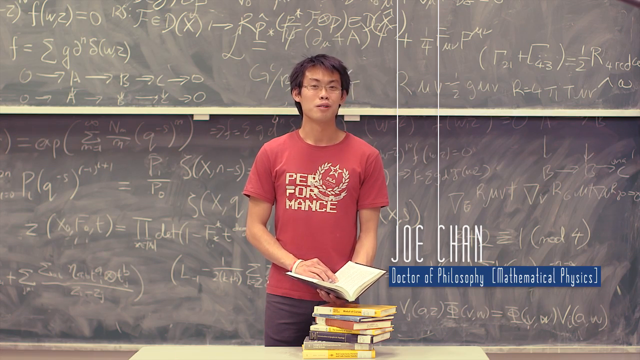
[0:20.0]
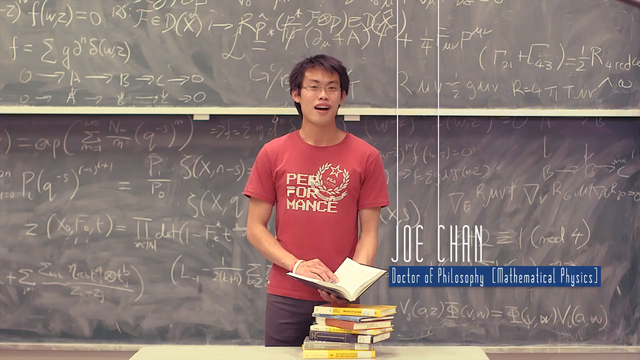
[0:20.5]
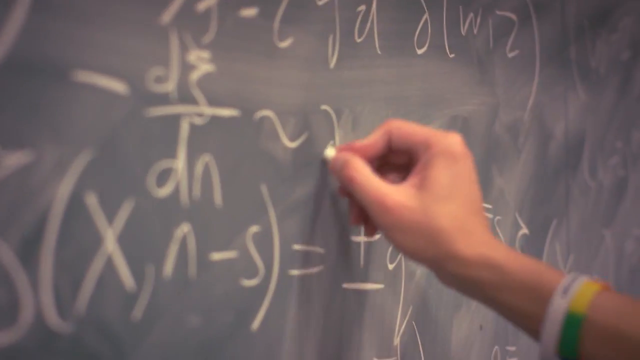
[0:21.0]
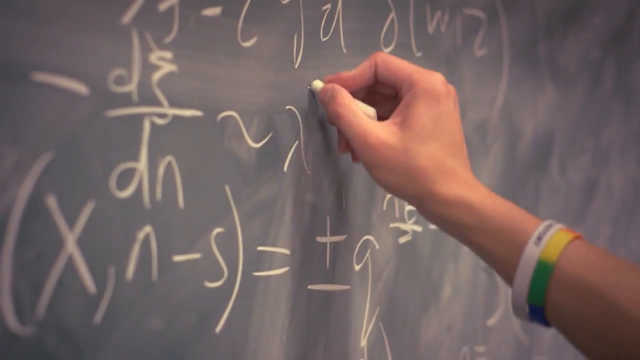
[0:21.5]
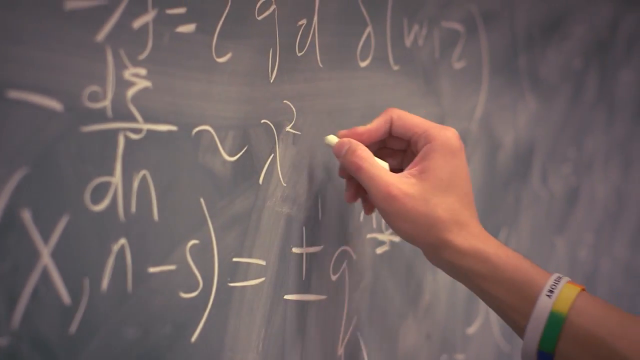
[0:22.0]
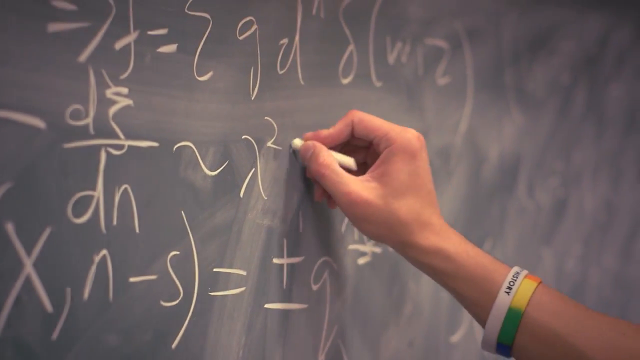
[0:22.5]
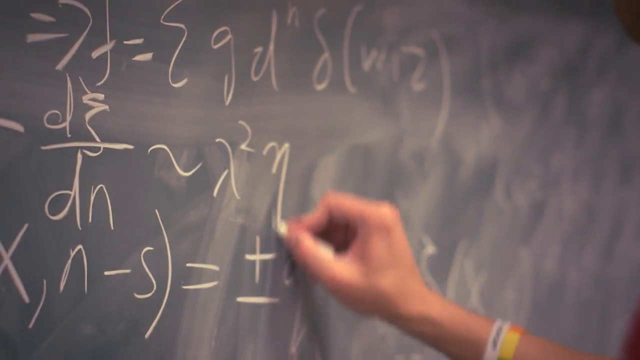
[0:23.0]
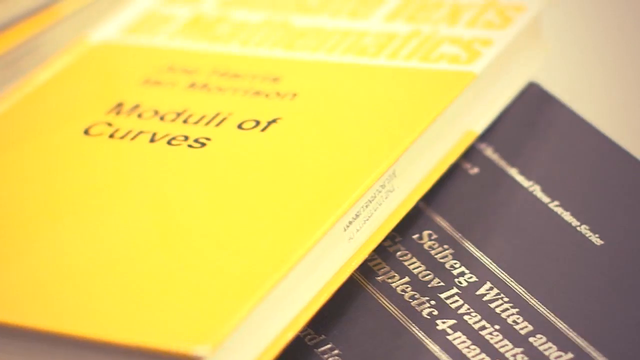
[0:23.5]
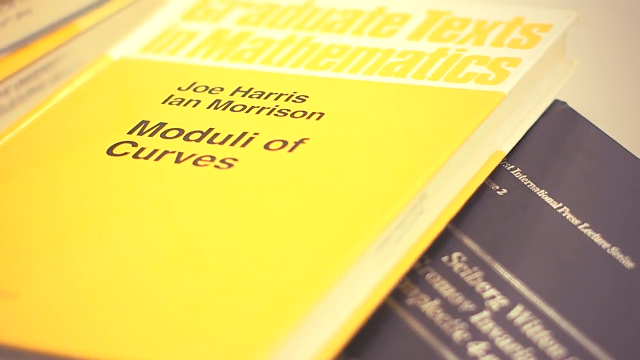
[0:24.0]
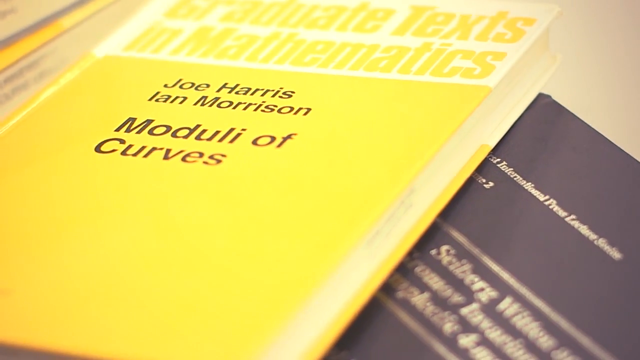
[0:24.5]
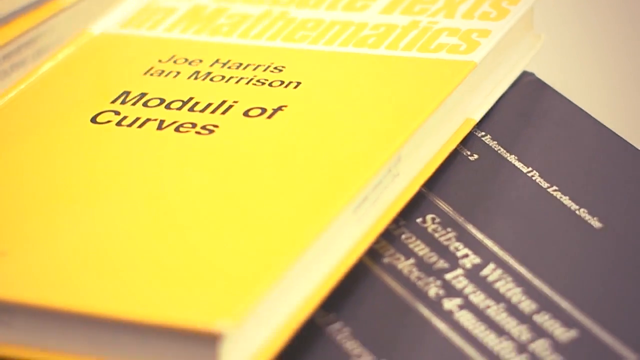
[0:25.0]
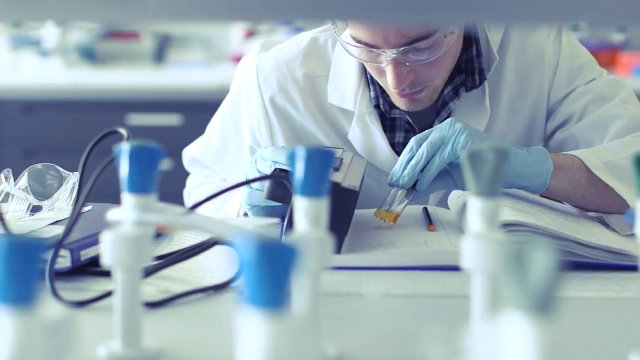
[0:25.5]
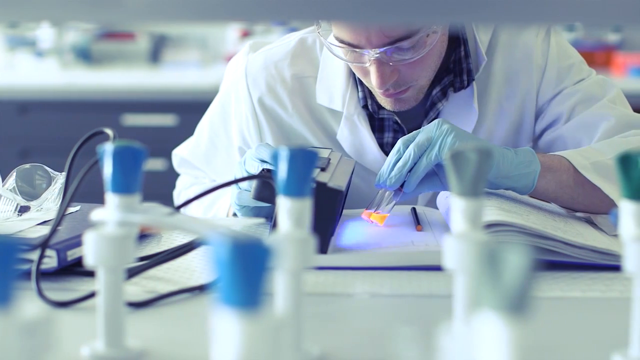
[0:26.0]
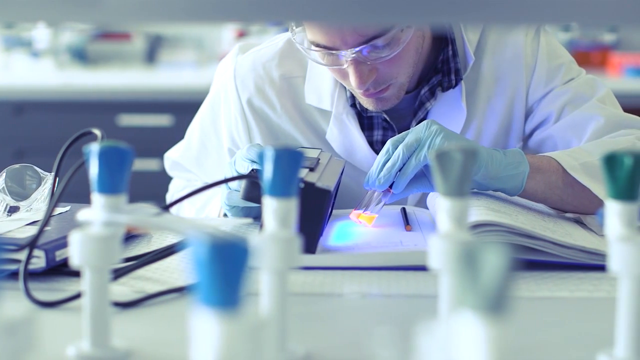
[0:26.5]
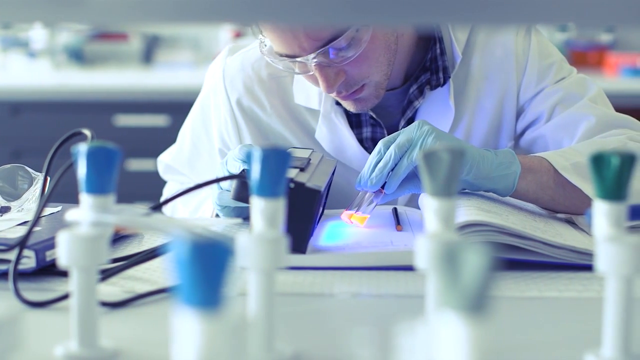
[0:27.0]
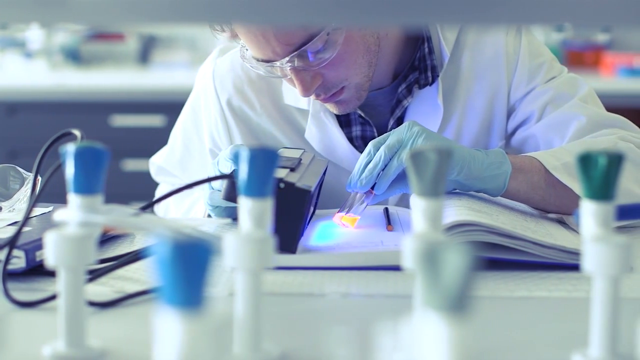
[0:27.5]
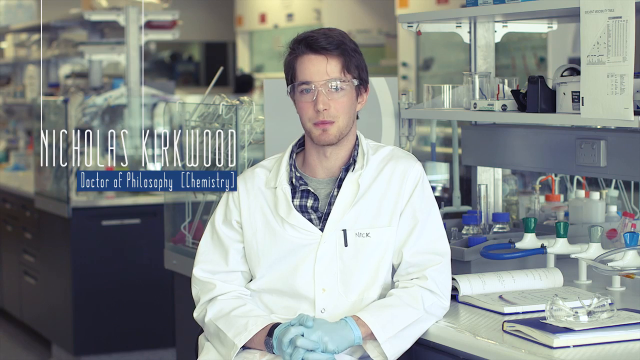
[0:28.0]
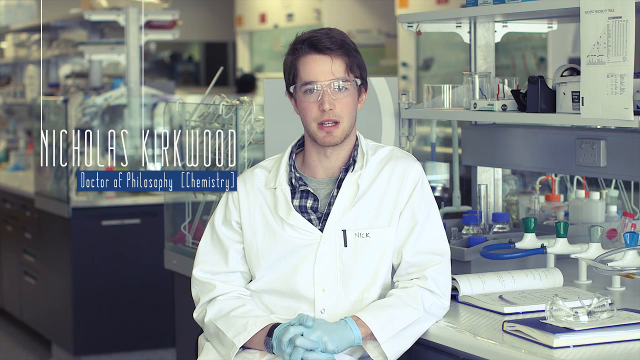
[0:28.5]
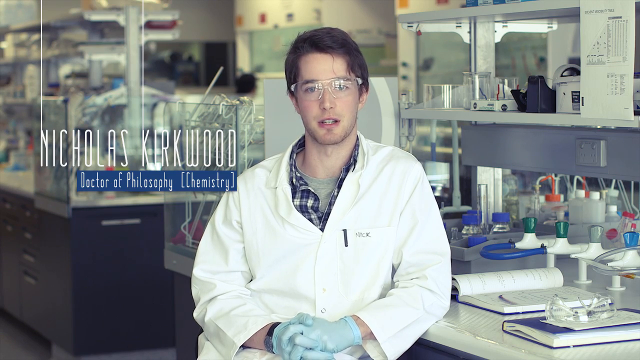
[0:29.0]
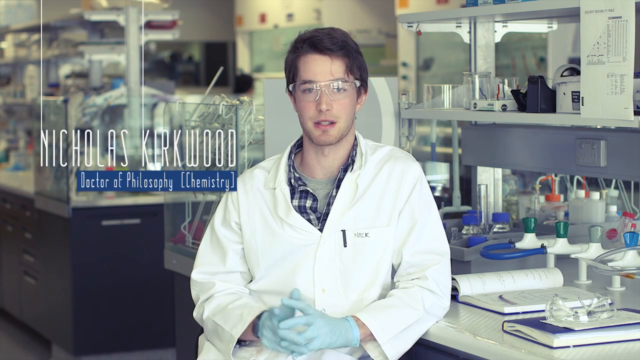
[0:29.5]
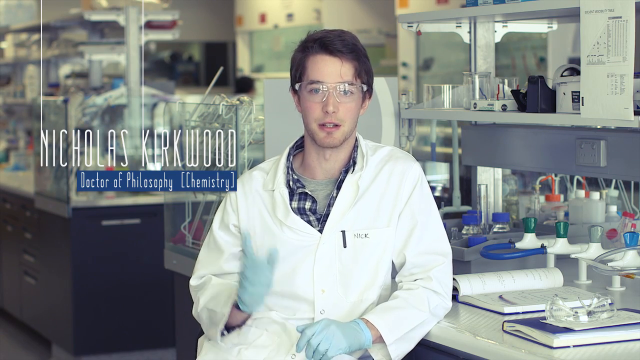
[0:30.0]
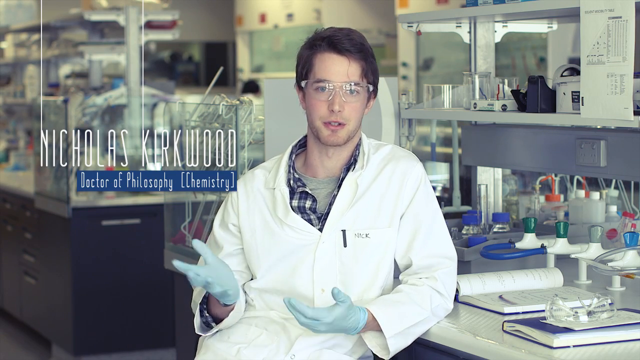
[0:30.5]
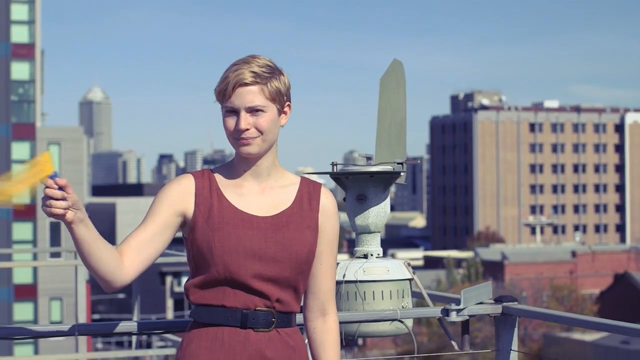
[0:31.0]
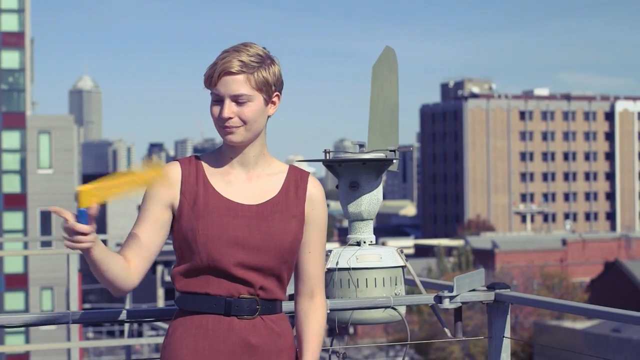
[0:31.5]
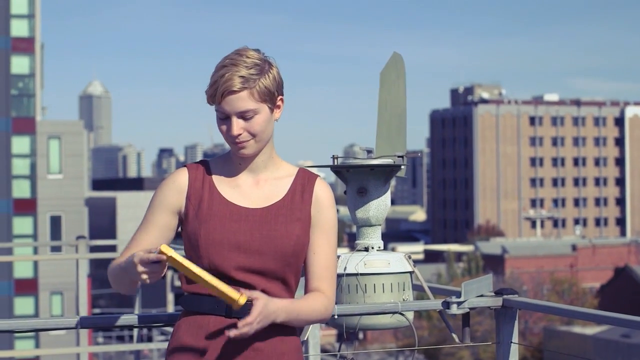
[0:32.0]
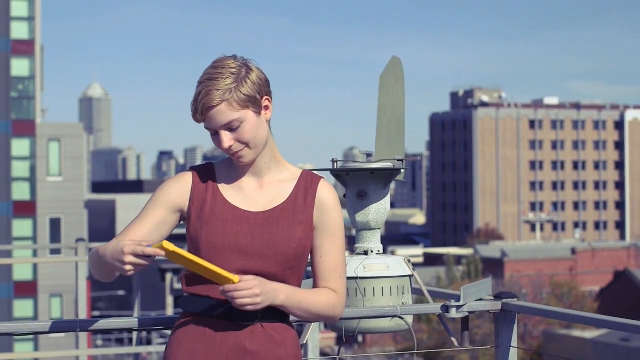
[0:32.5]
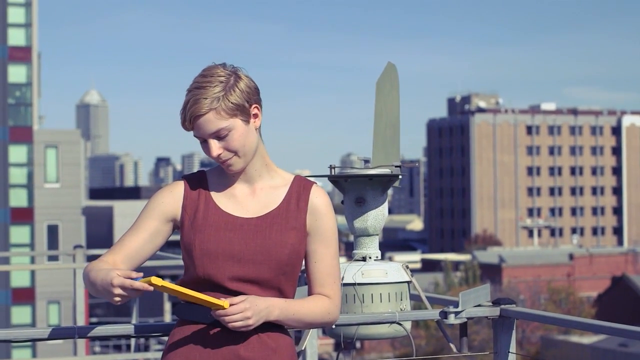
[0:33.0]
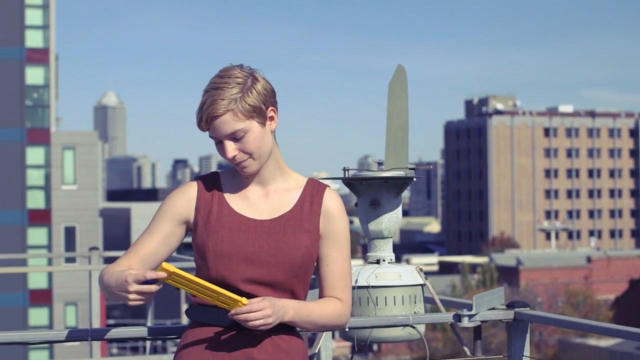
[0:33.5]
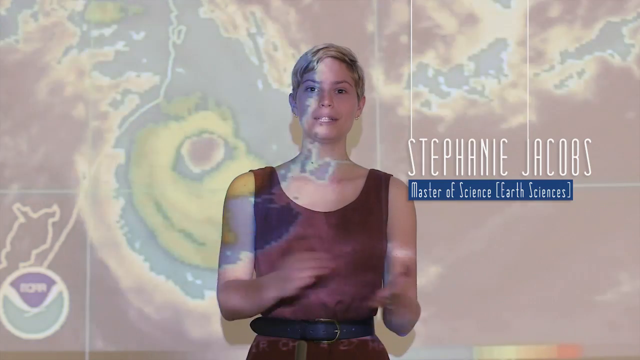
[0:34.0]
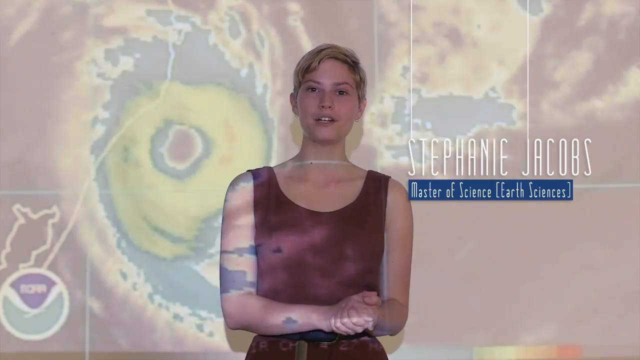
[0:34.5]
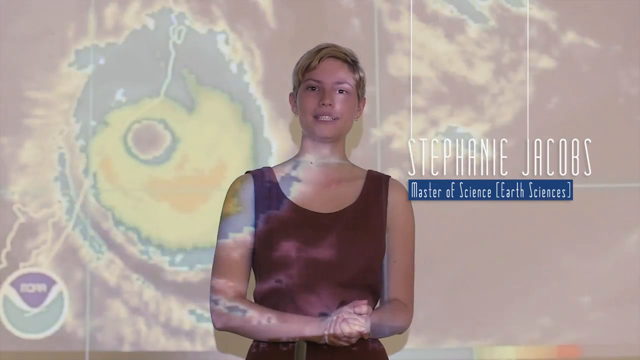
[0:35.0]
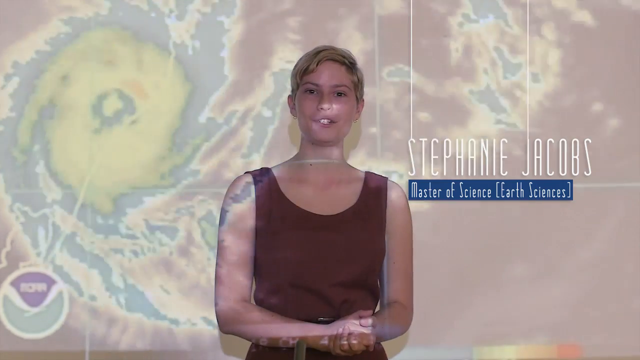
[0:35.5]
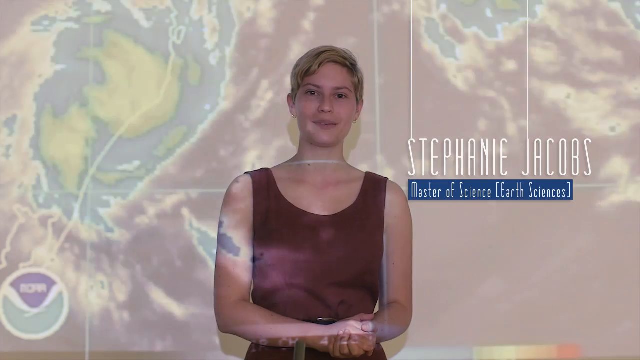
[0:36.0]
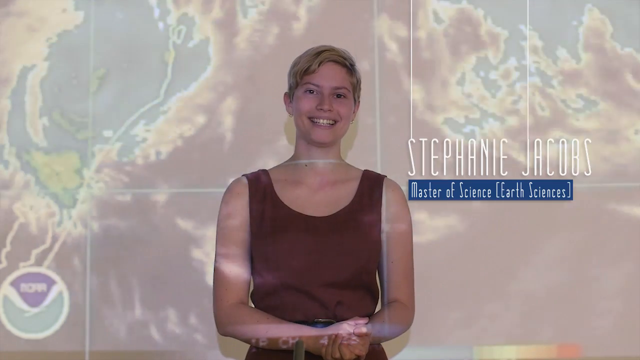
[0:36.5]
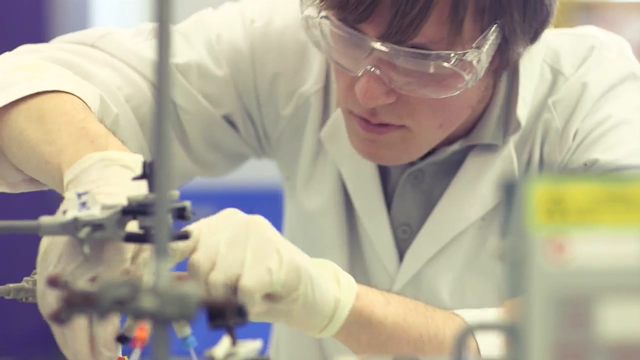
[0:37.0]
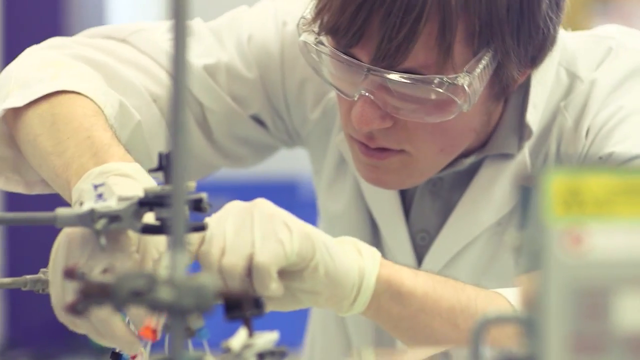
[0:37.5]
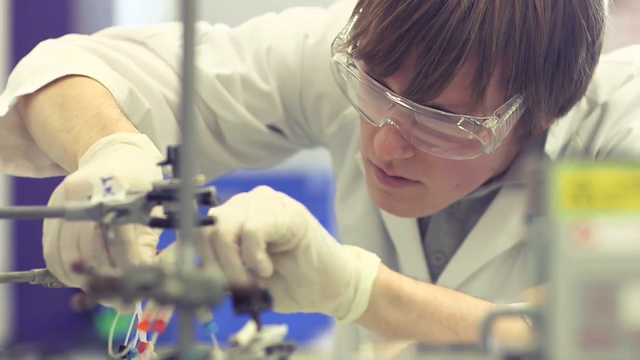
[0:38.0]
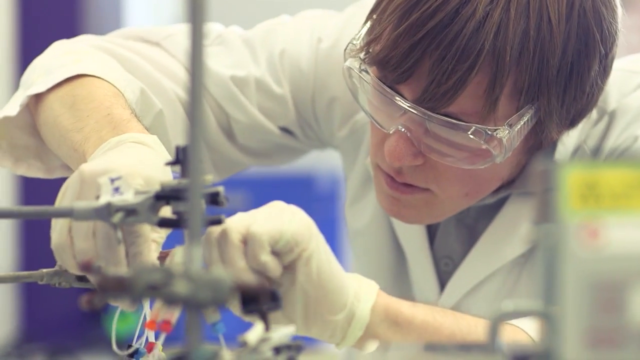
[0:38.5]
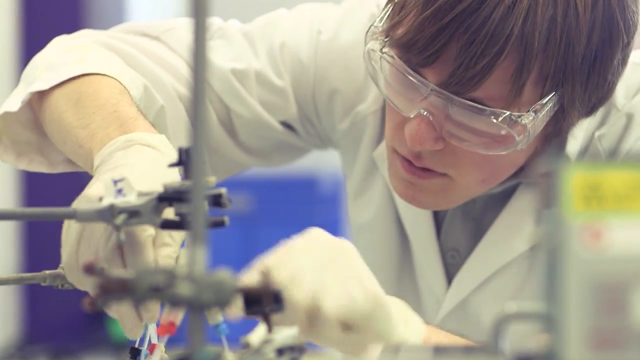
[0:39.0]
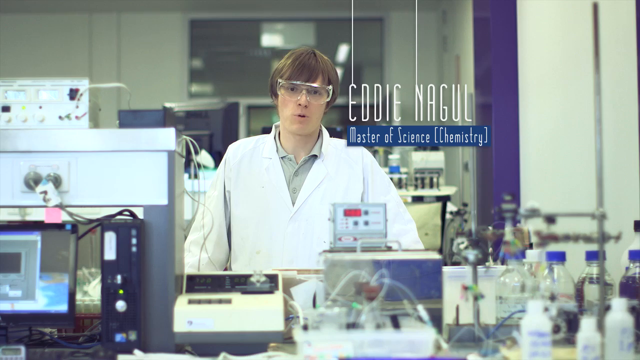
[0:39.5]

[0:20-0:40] Joe Chan, a mathematical physicist, is shown in close-up writing out an equation with chalk in his right hand. Two books appear: one says "module of curves" and has a yellow cover, and the other has a blue cover. A researcher with an open book wears gloves, a white lab coat and something like safety glasses, and uses what looks like a flashlight; he is Nicholas Kirkwood, Doctor of philosophy and chemistry. A woman grips something in her right hand that looks like a yellow paddle and swings it around, with the city skyline behind her; she appears to be standing on top of a building, and there is a mechanical device to her right. She then stands in front of a projector, with what looks like a weather map projected over her, staring straight ahead. Her name, Stephanie Jacobs, appears, and to her right the text reads "master of science in earth sciences". A young man named Eddie Nagel works in a lab, wearing a white lab coat, white gloves and protective eye goggles.